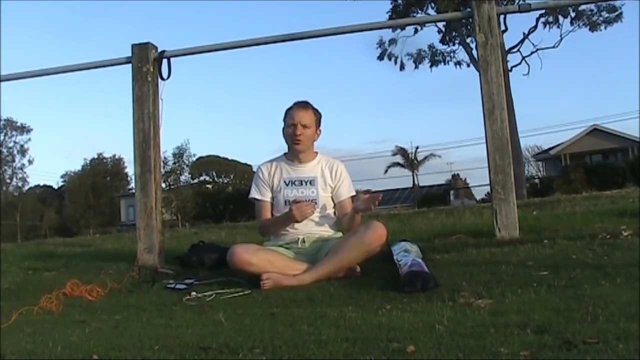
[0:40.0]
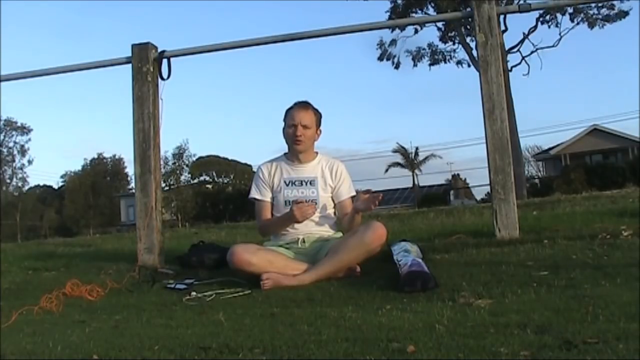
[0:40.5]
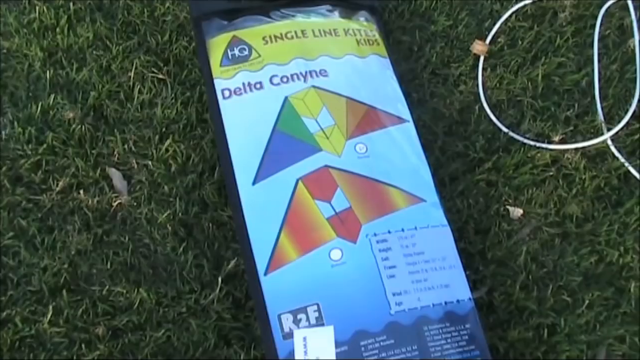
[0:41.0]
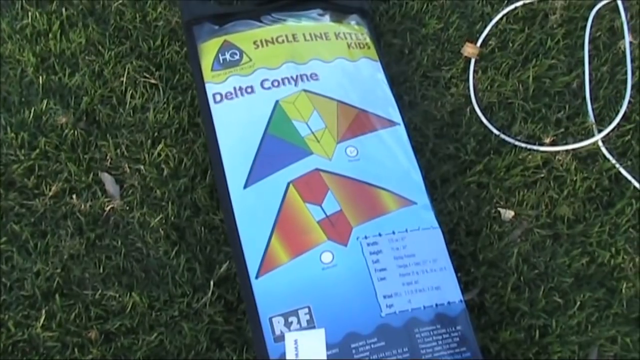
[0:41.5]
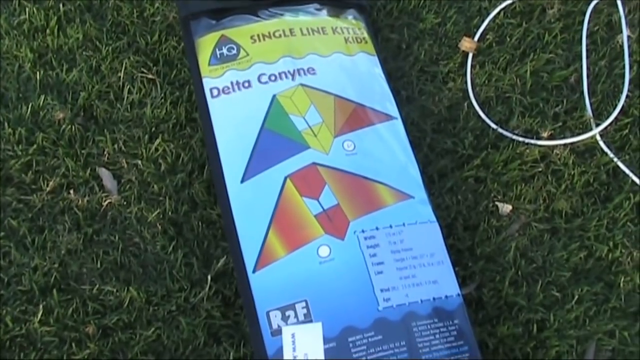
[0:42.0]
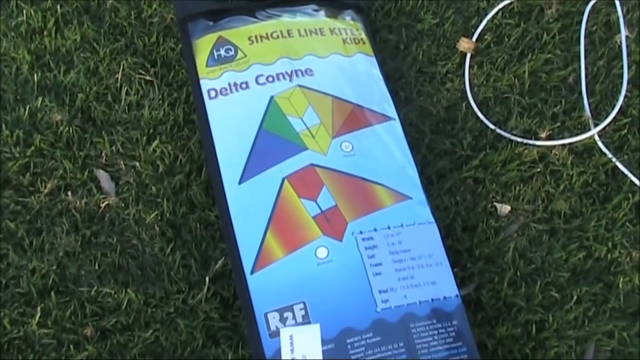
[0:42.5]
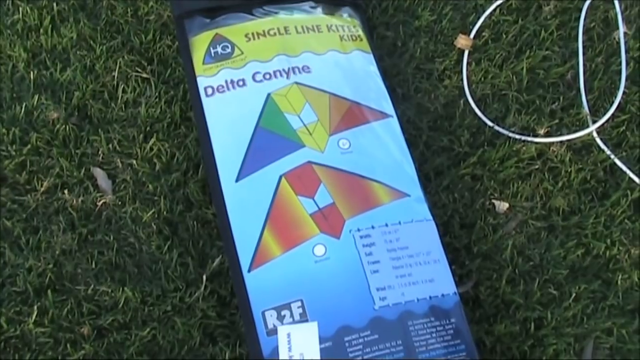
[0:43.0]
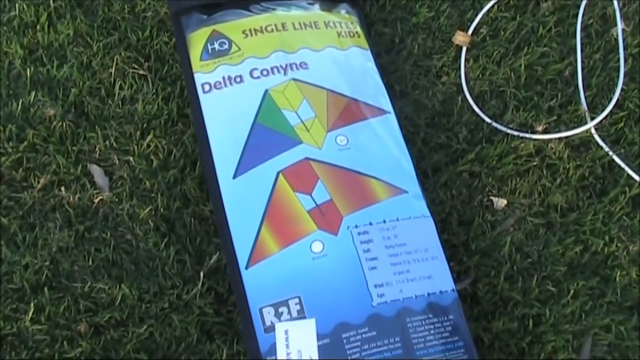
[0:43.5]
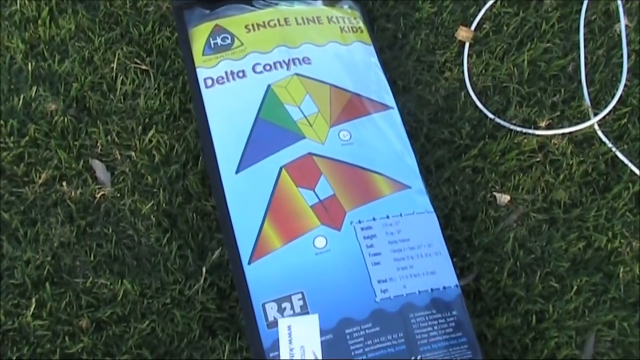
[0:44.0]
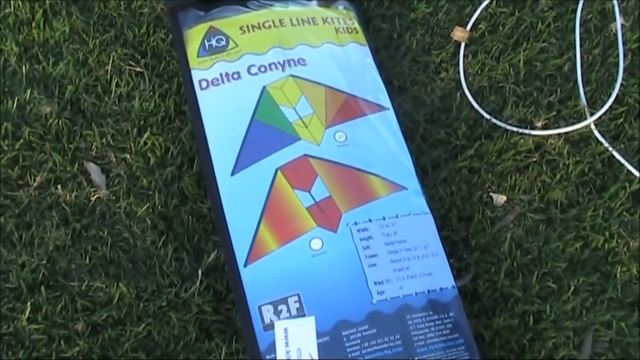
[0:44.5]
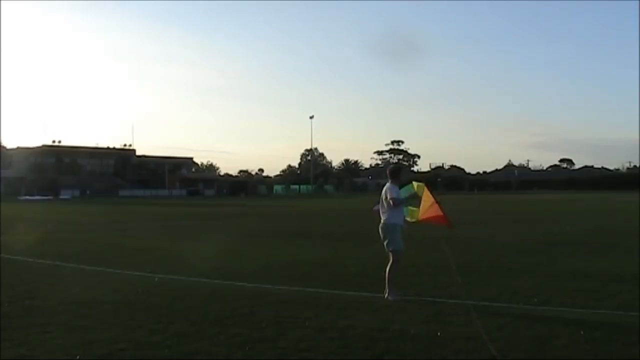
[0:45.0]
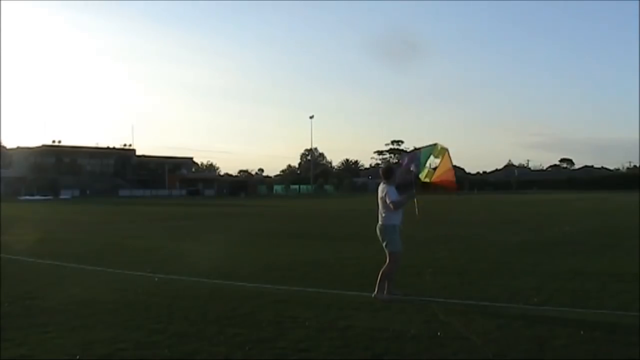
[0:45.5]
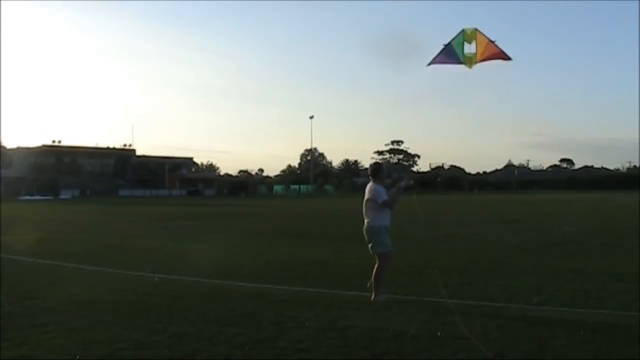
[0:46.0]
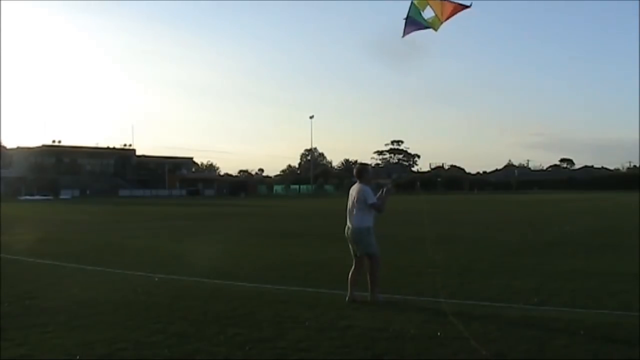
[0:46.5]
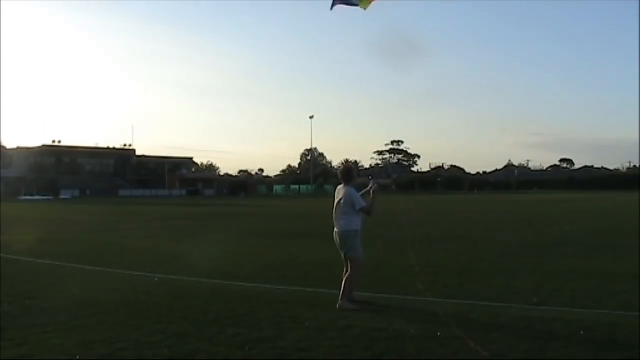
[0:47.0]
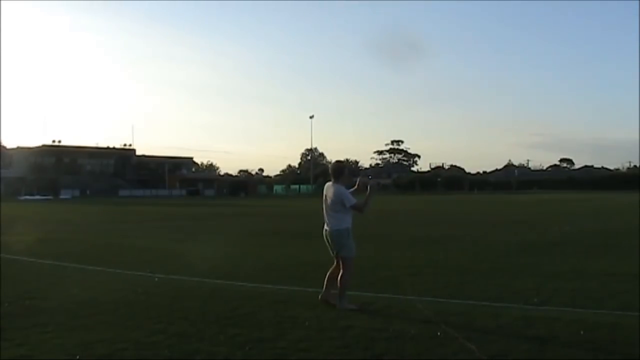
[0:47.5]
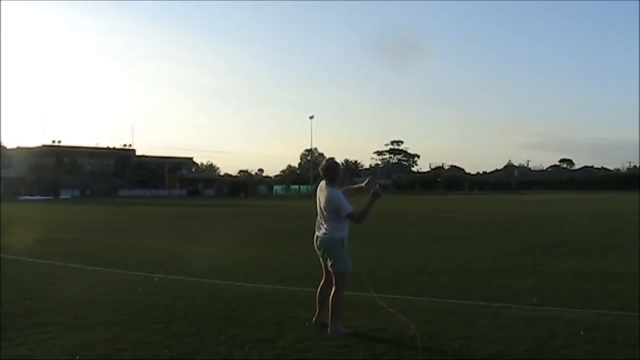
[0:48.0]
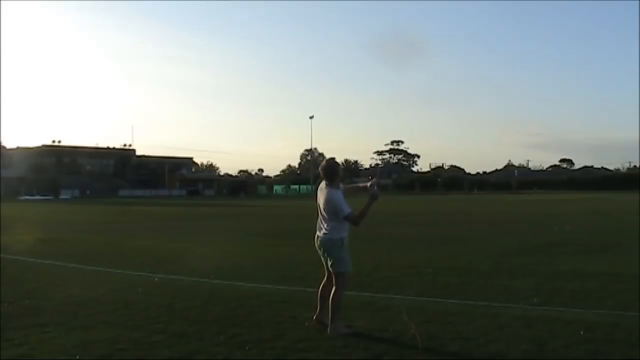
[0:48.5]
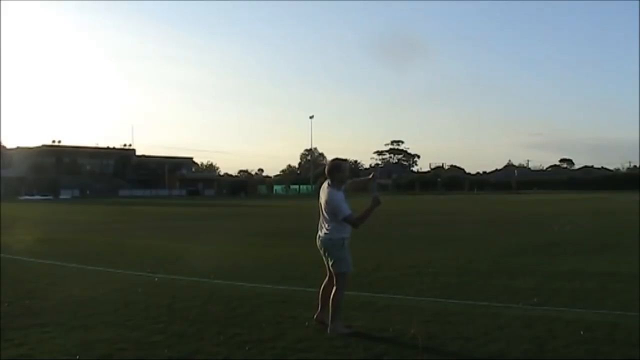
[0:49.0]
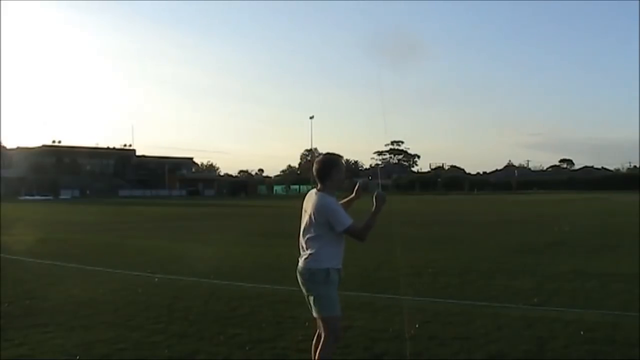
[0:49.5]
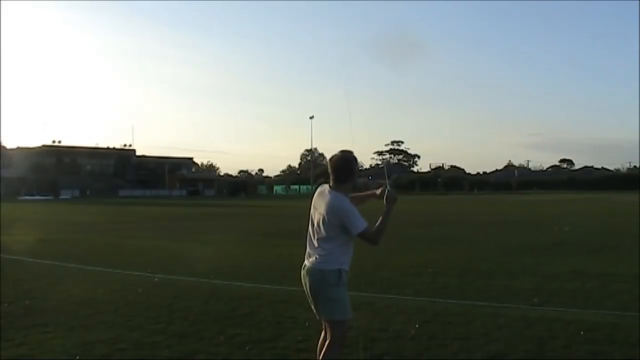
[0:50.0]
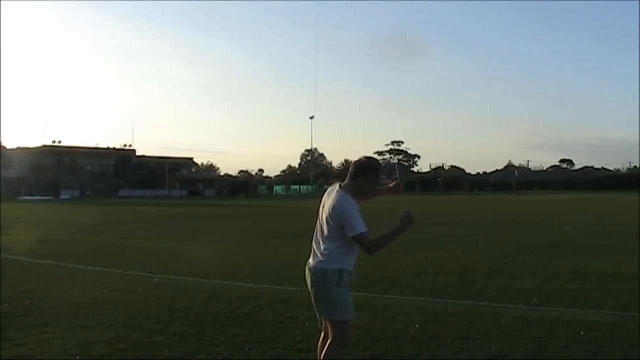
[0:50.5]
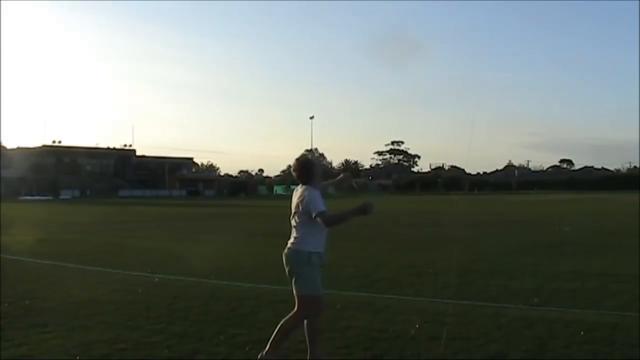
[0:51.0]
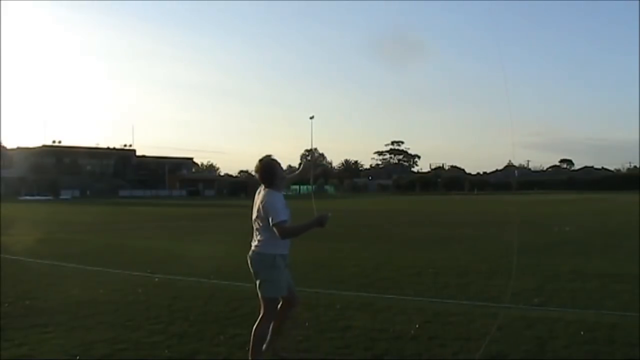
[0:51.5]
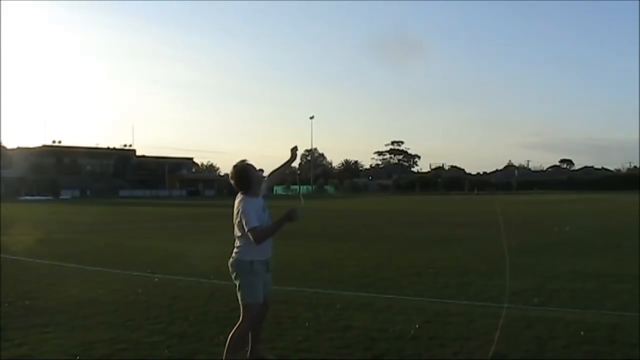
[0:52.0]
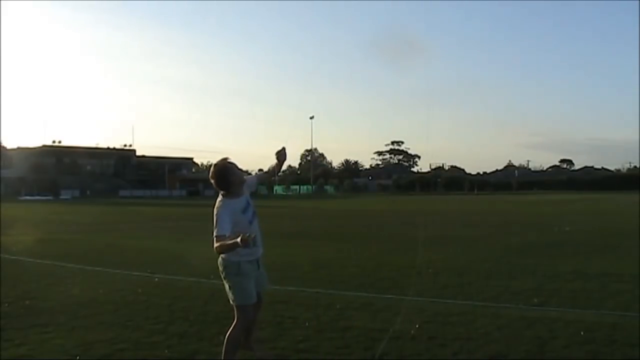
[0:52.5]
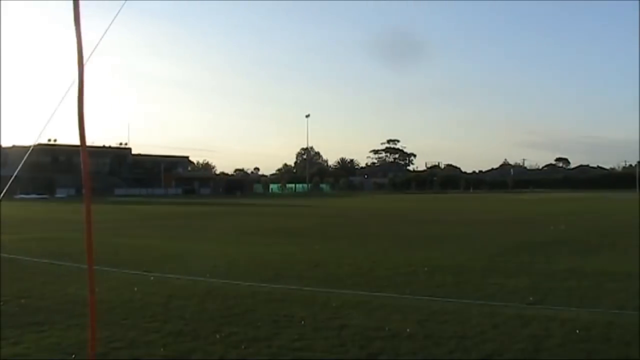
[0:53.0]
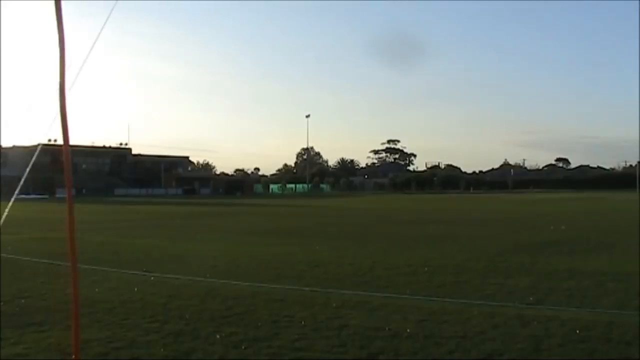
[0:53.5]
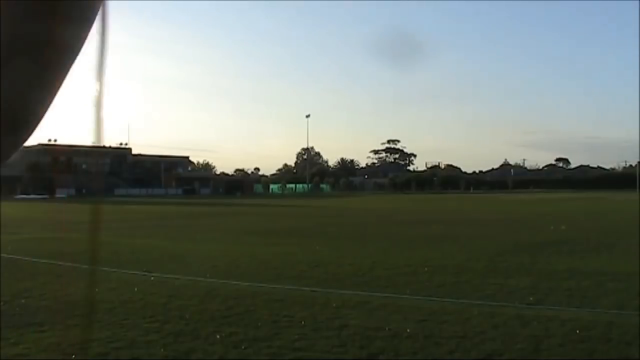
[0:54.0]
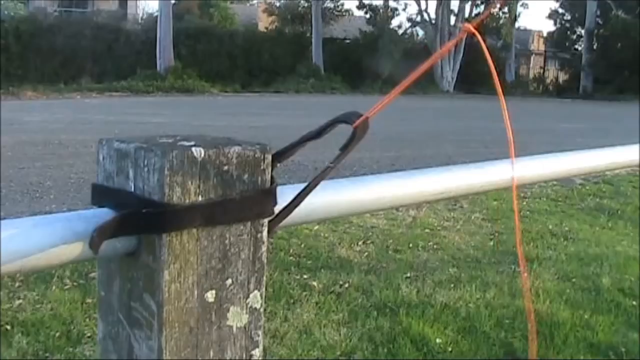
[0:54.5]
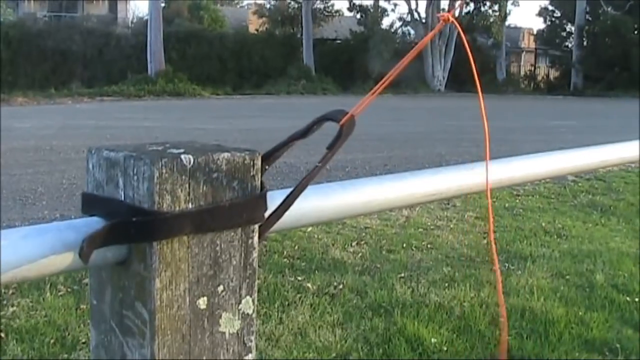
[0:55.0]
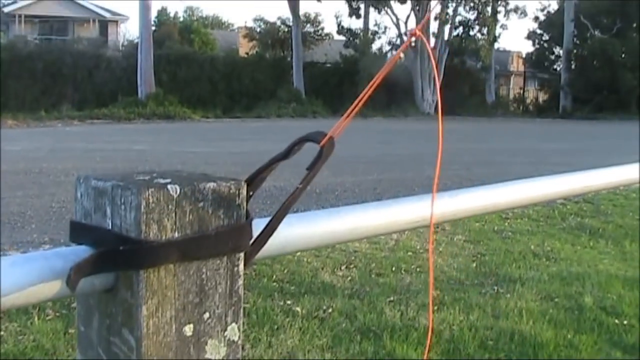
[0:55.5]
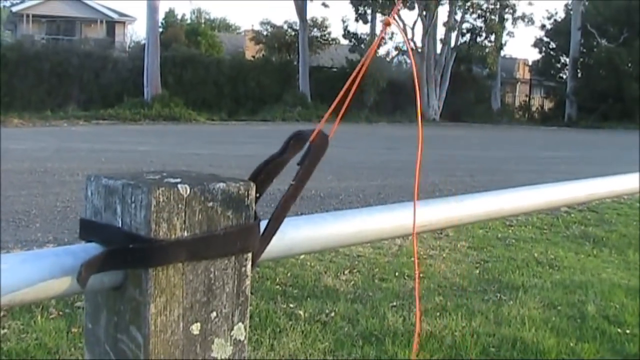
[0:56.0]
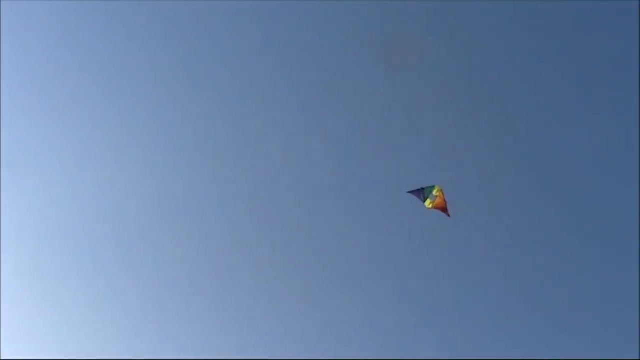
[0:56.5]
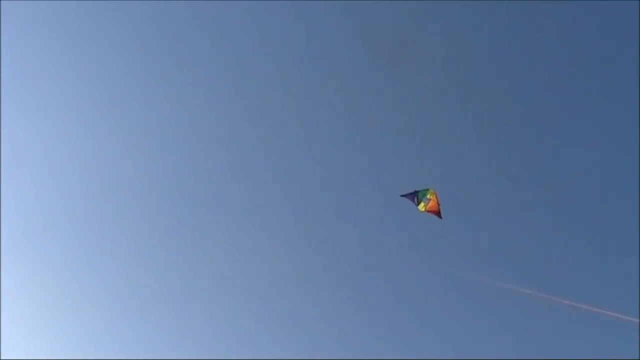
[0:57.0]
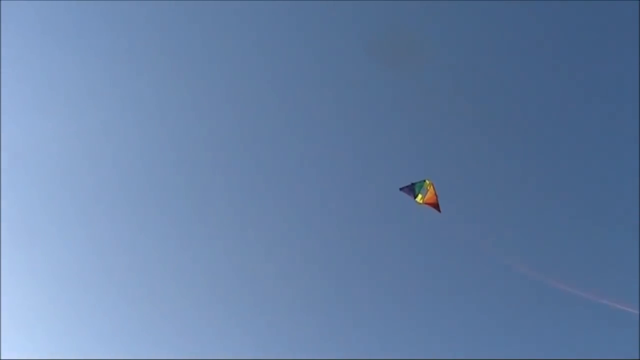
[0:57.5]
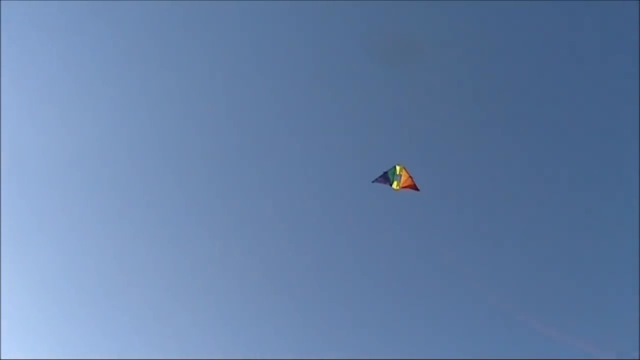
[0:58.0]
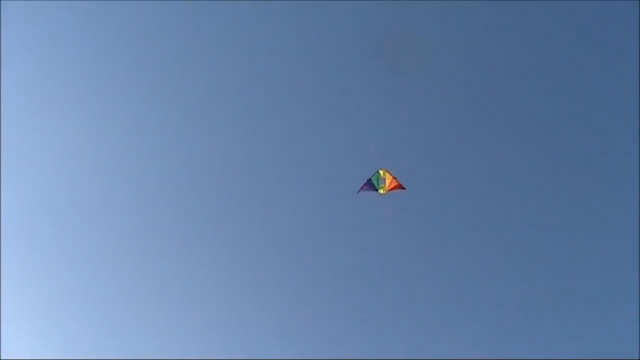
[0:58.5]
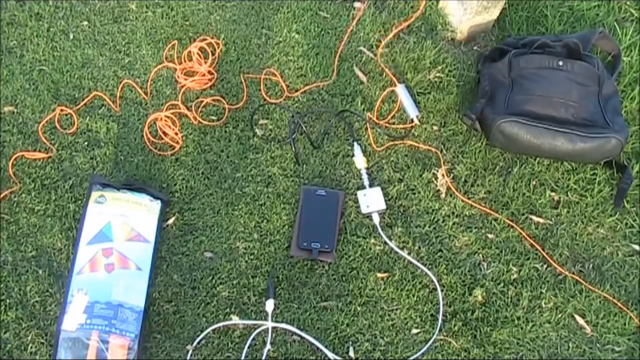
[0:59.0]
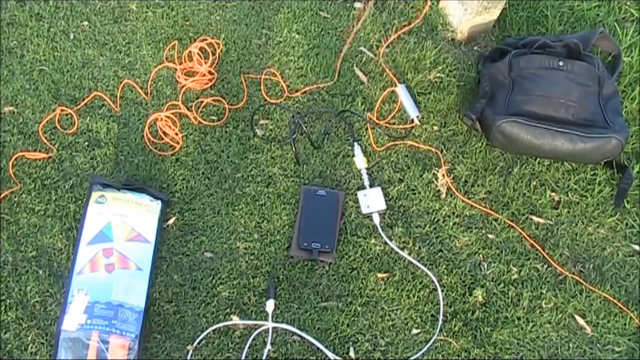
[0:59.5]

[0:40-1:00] A man who flies a kite with some type of antenna sits cross-legged on the ground in a white t-shirt and green shorts. Around him are accoutrements such as the kite package and orange line for holding the kite. His shirt has some letters and then "radio books" on it. He is white, with short hair, and is balding. The houses, trees and fence behind him suggest he is not in America, probably Australia. The video switches to an up-close picture of his kite package, with text including "hq," "single line kites," "kids," "delta" and the spelled-out word "conyne," which looks like a misspelling. It shows two triangular kites, one rainbow-coloured and one kind of orange and yellow, along with a white kite-line or fishing-line type of thing. Then the man is in a field and has just launched the kite.